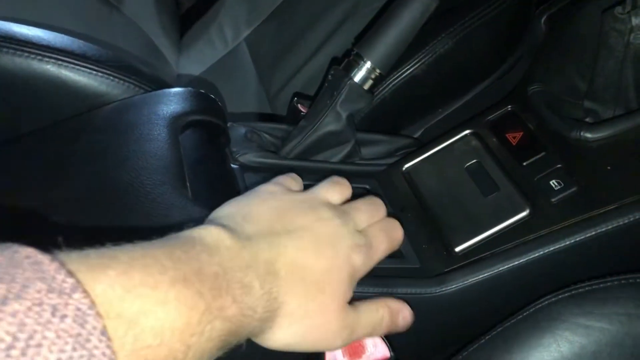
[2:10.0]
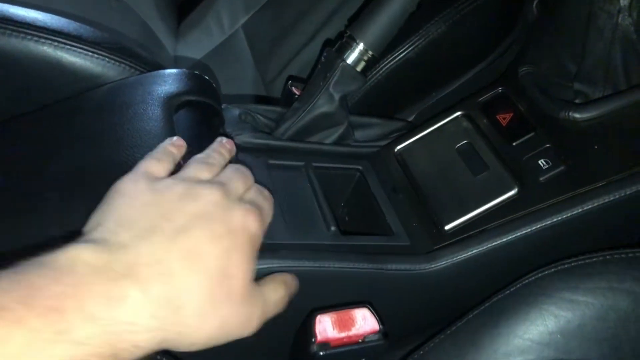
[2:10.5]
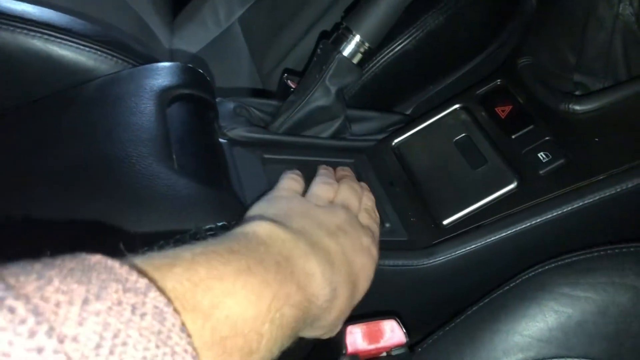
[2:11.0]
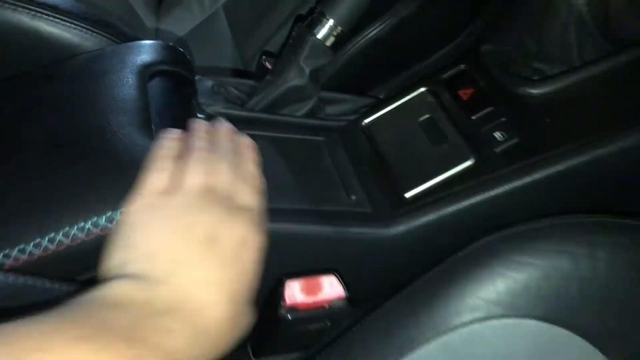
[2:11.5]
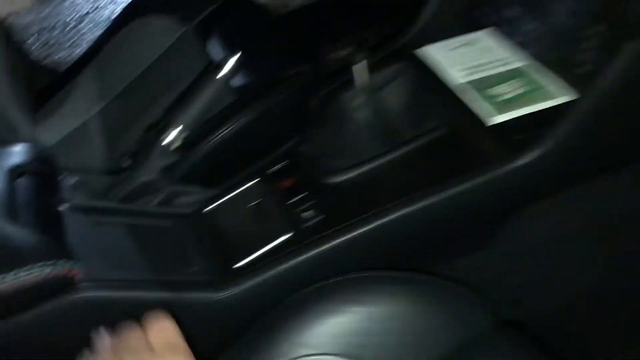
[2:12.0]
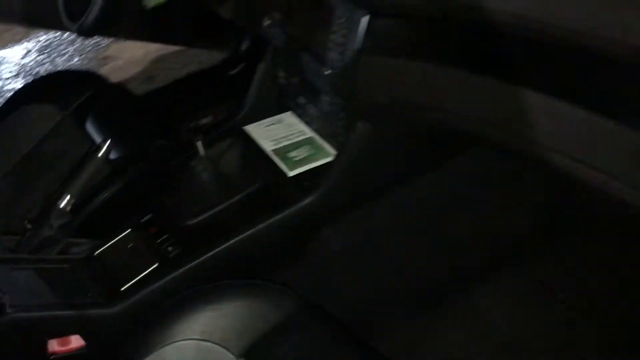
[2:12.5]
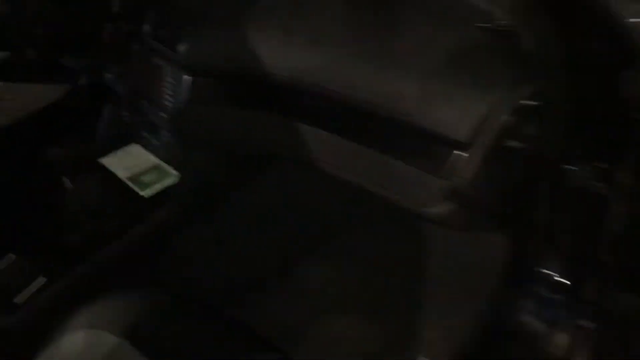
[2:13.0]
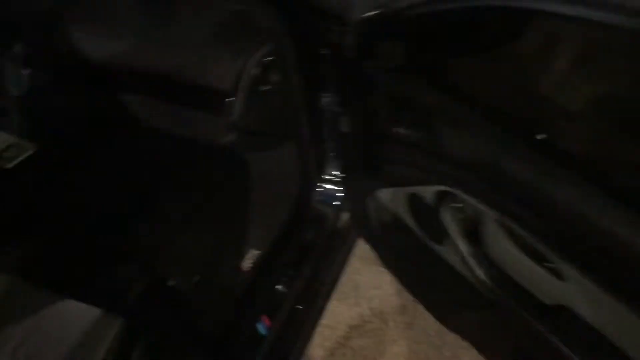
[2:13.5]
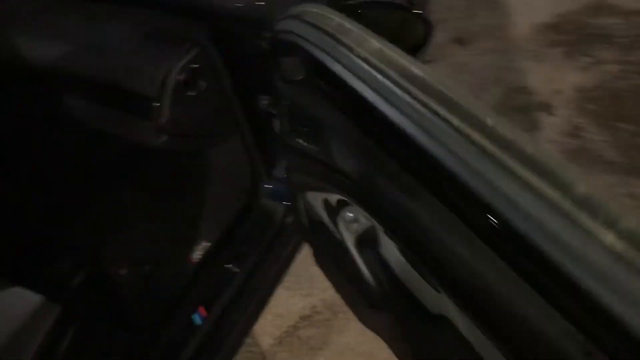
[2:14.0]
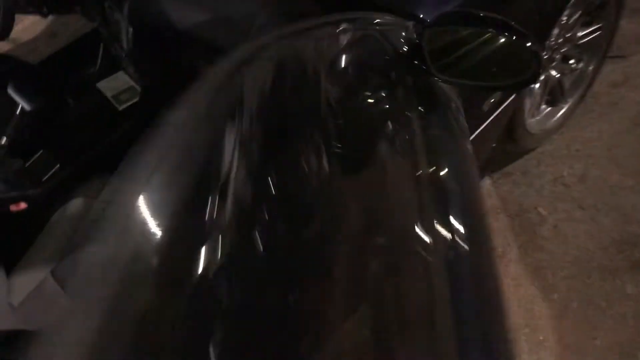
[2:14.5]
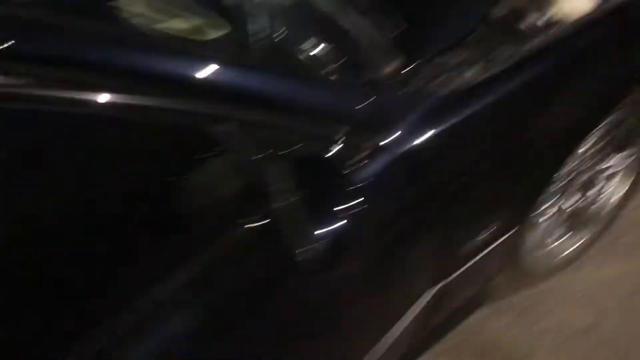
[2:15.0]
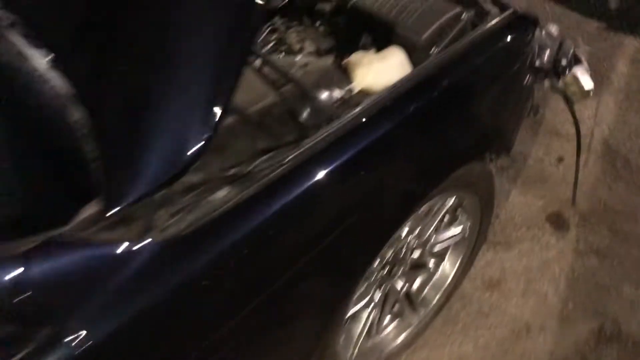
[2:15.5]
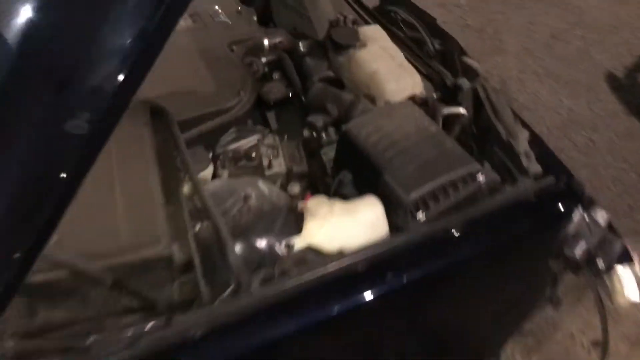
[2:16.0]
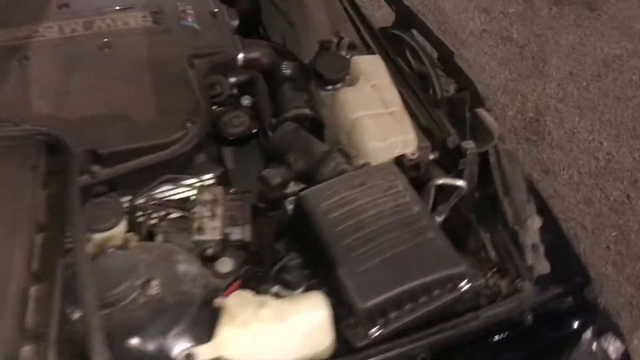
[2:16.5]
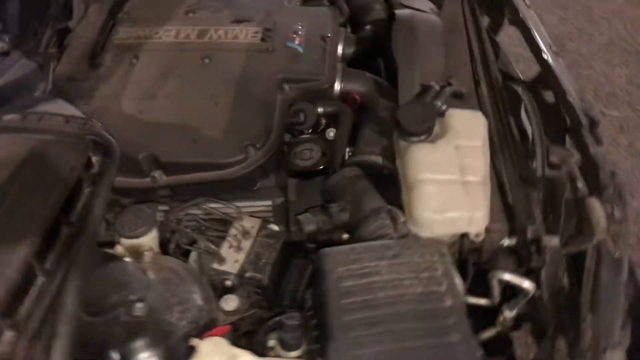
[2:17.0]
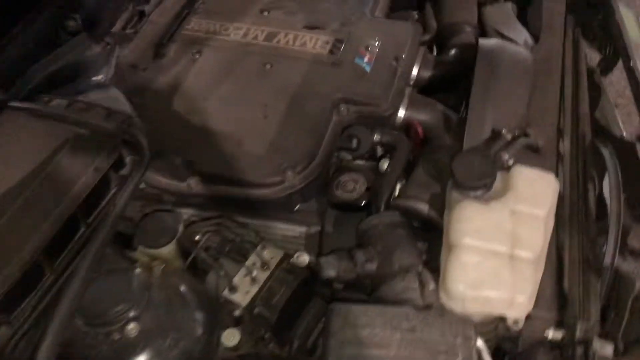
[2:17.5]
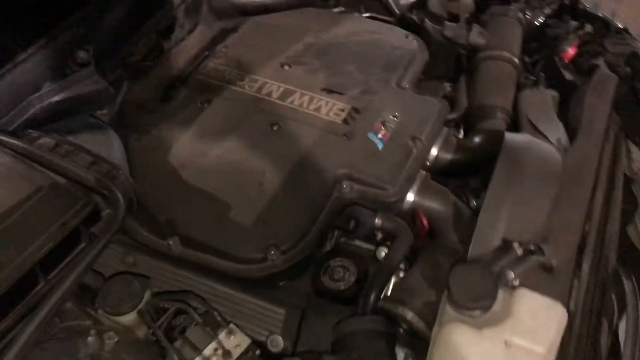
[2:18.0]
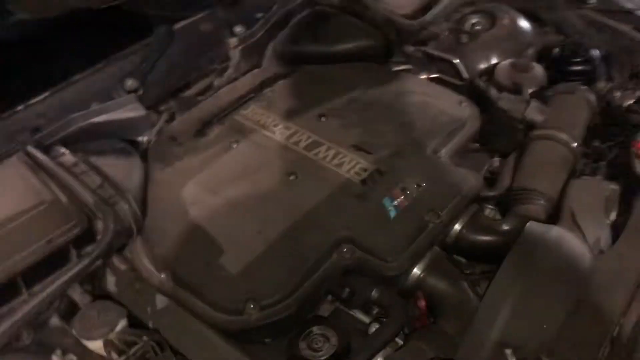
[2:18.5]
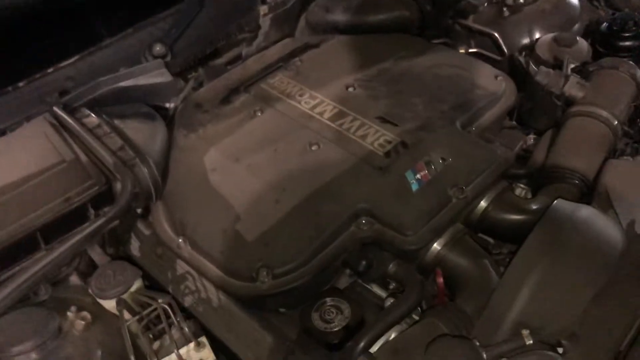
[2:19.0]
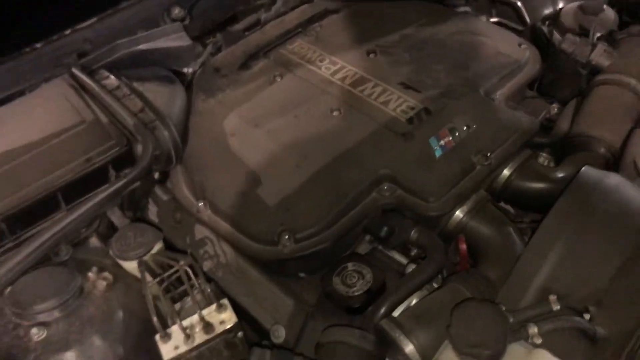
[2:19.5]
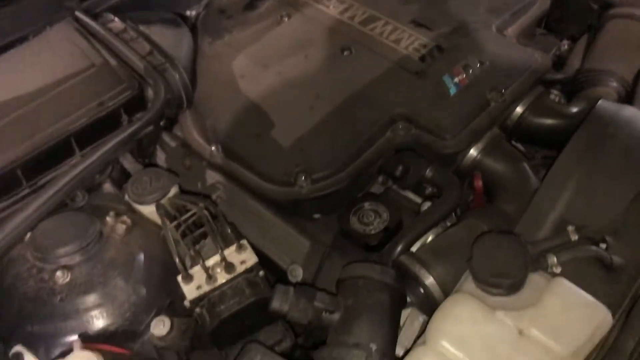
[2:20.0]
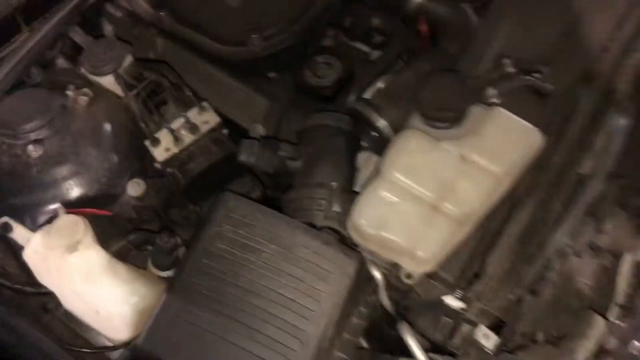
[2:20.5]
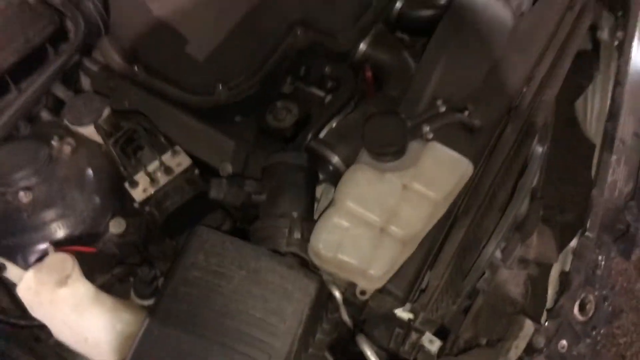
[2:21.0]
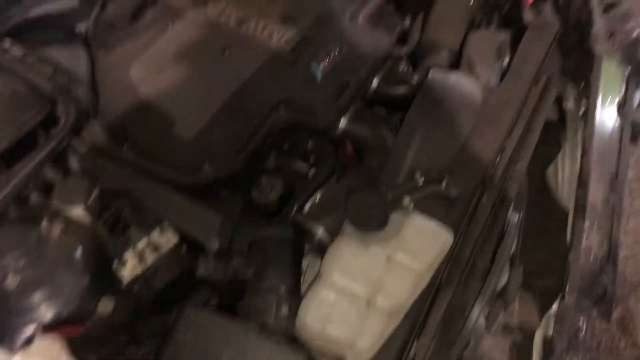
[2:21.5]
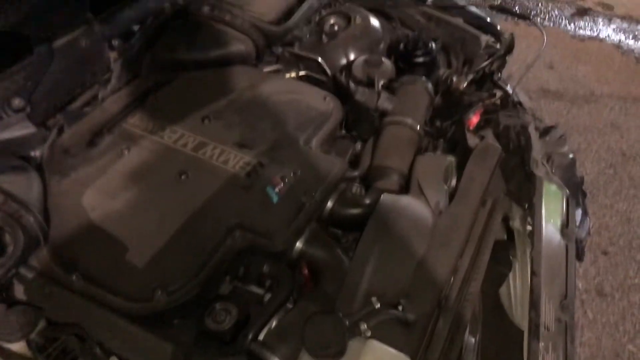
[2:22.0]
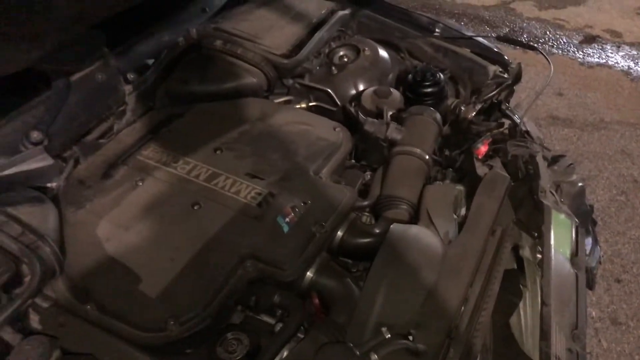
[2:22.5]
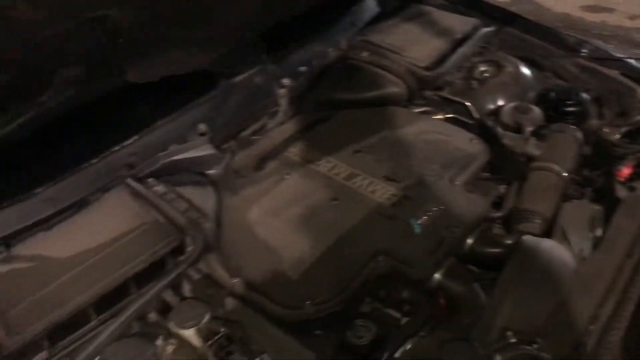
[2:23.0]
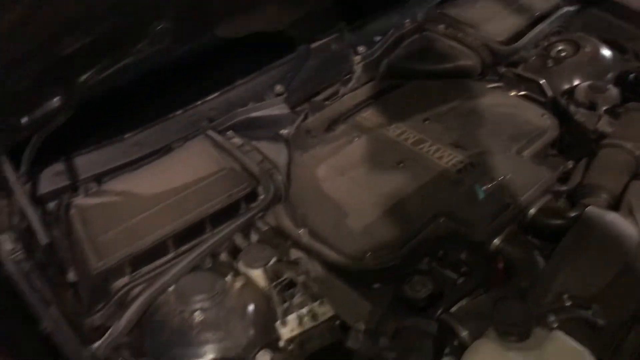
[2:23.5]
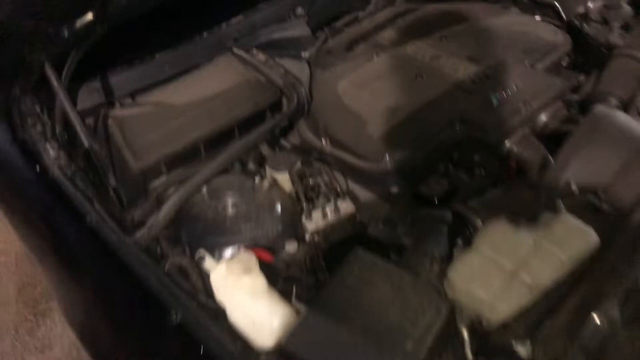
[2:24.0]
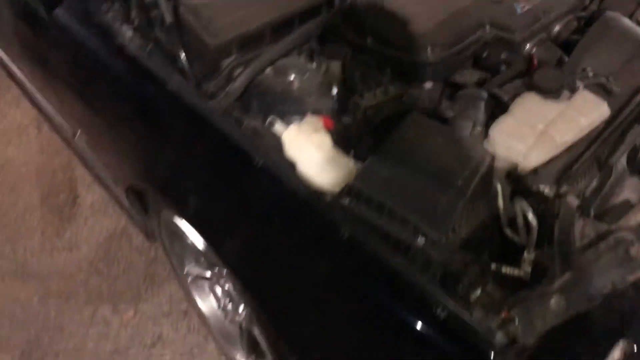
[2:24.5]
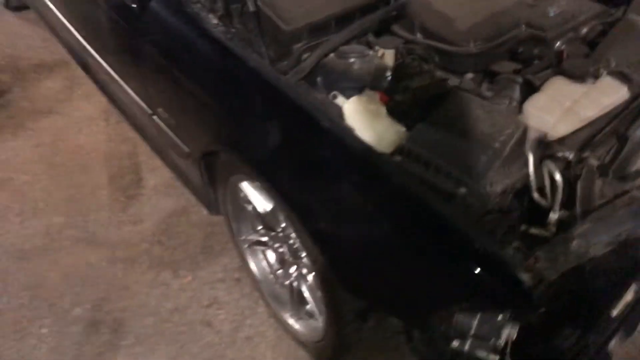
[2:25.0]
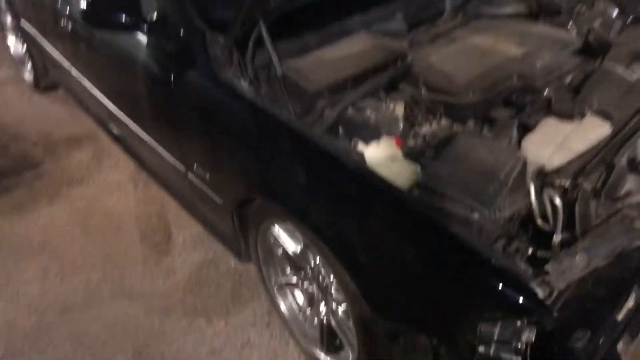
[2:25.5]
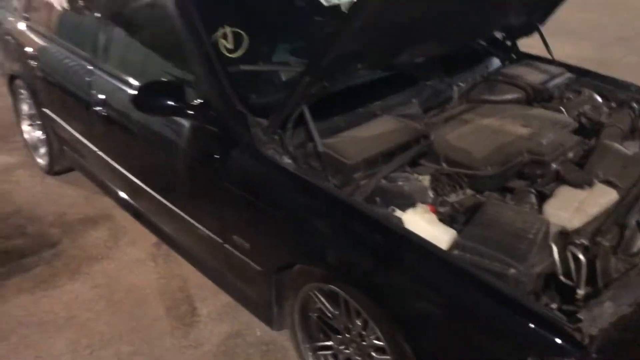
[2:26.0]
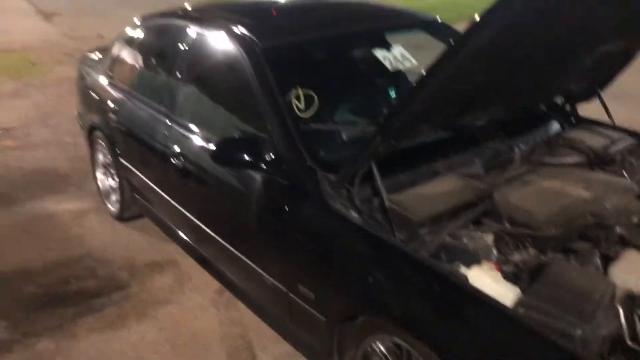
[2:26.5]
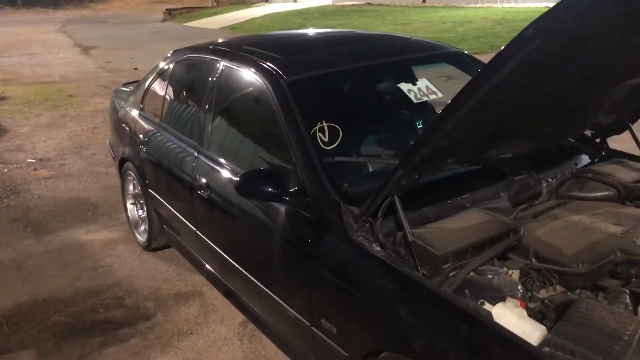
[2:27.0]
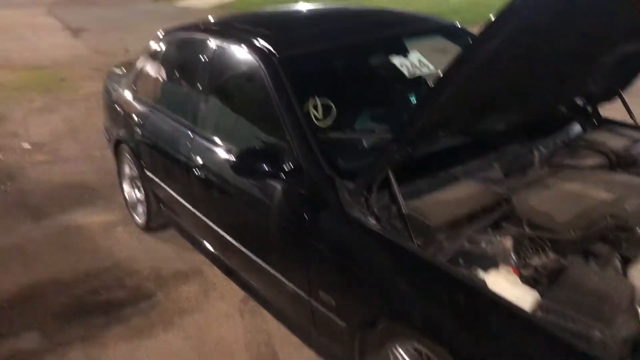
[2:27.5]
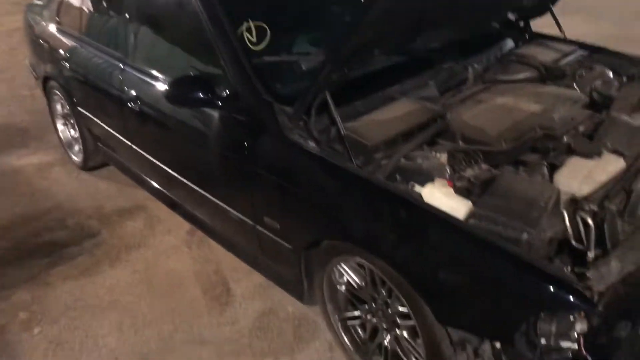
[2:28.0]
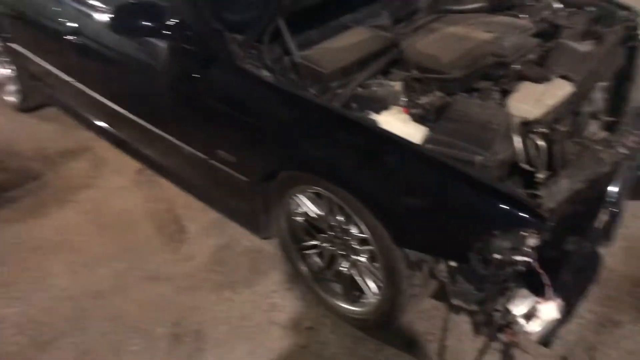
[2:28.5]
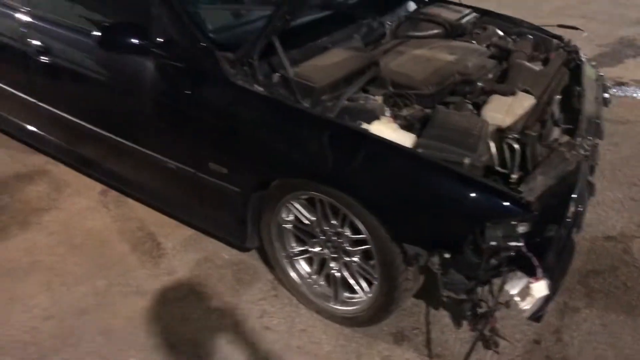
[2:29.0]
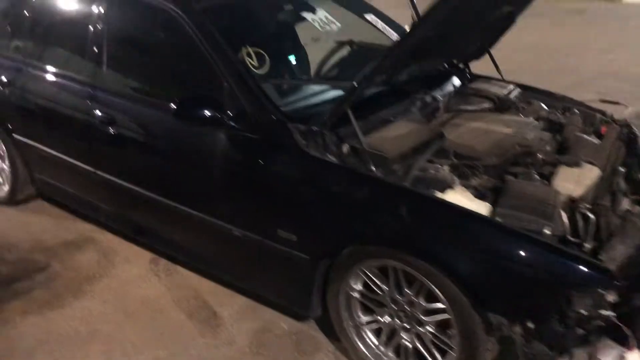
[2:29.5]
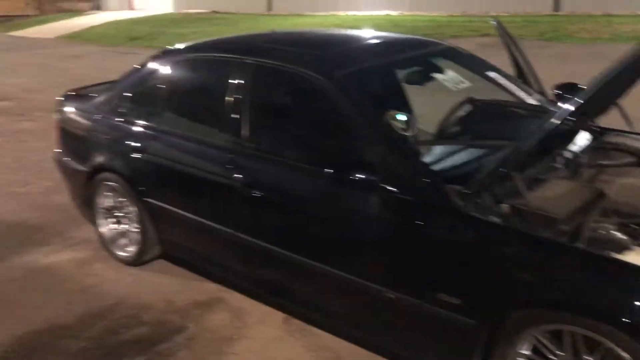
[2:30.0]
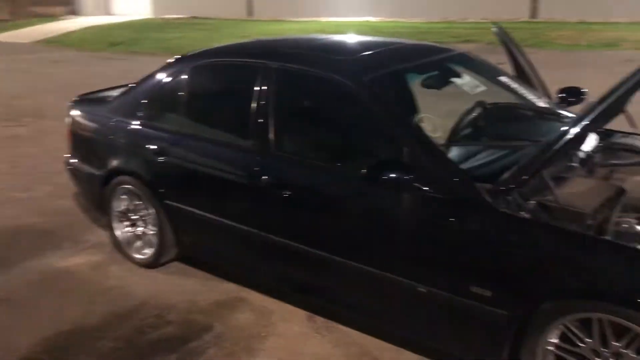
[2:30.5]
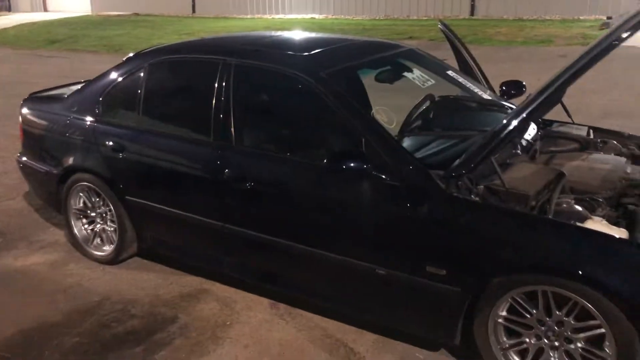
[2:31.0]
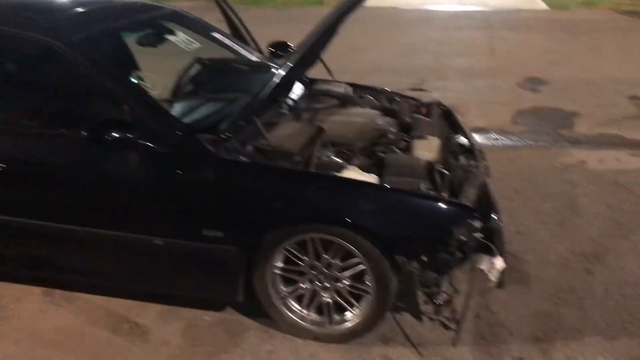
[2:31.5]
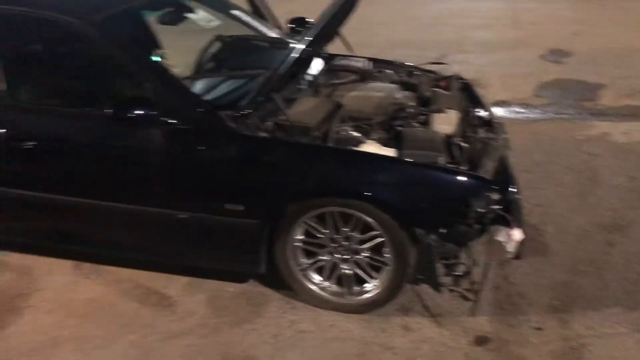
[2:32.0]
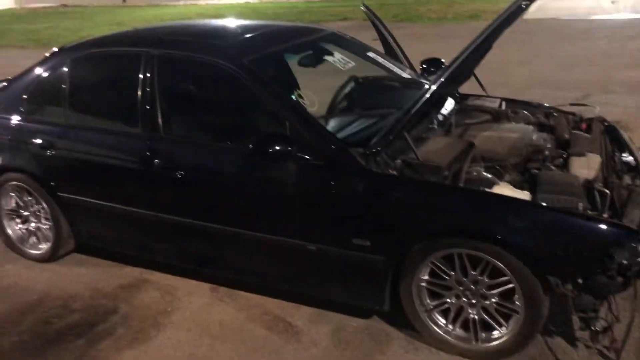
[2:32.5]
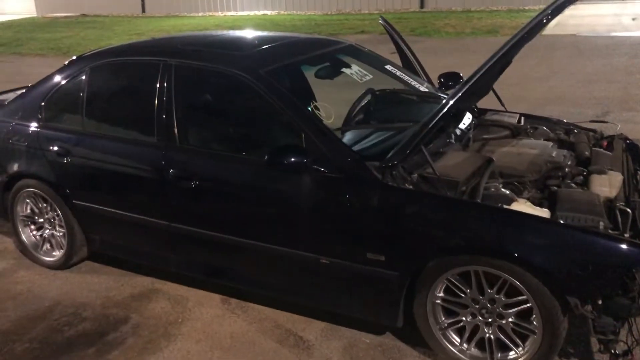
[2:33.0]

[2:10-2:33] A person uses his left hand to point out parts of the vehicle and heads to the front. In the engine bay most parts, such as the turbo, the engine, the washer fluid, the coolant fluid and the engine cover, are still intact, with some slightly damaged. The engine cover has an M-Sport badge and "BMW M-Power" written on it, and the engine is a twin turbo. The bonnet has struts holding it open. The collision has badly damaged most of the driver side front. The front bumper, the headlights and the front blinker lights are missing. The vehicle sits low on the ground. At the collision area some cables, including some for the front center, are dangling where the headlights are missing, and the frame is badly damaged.